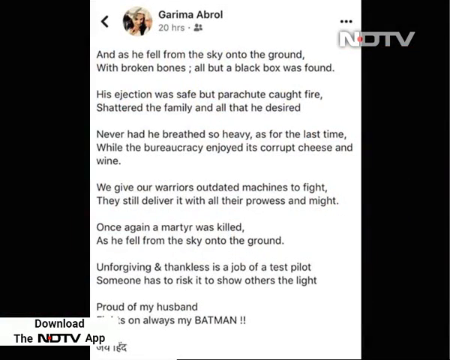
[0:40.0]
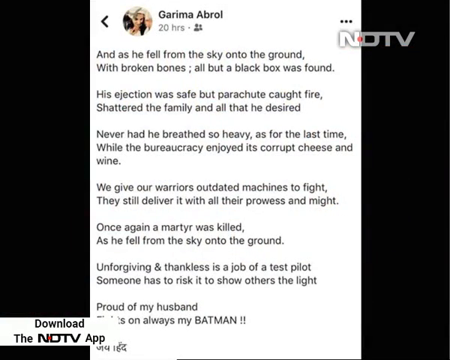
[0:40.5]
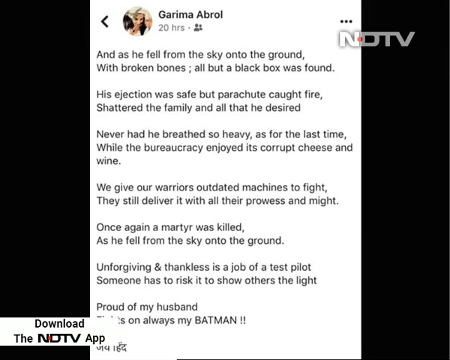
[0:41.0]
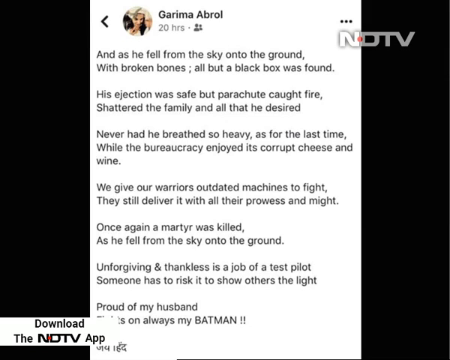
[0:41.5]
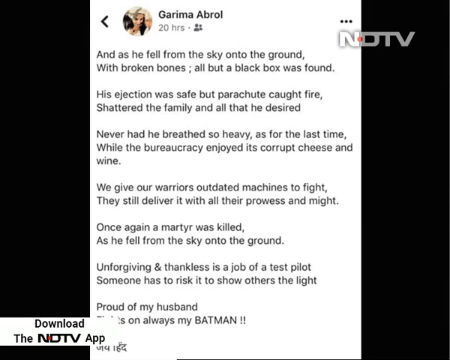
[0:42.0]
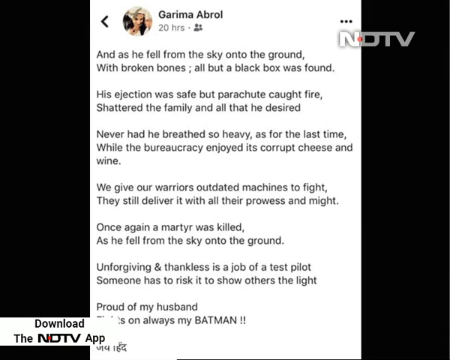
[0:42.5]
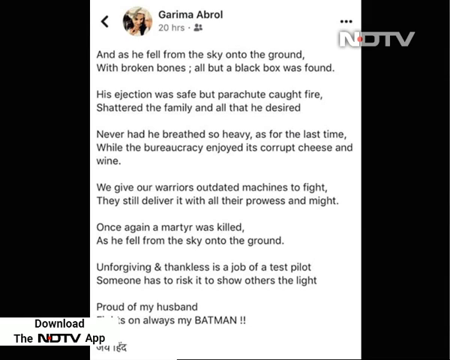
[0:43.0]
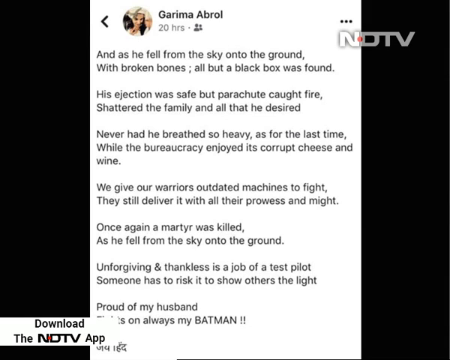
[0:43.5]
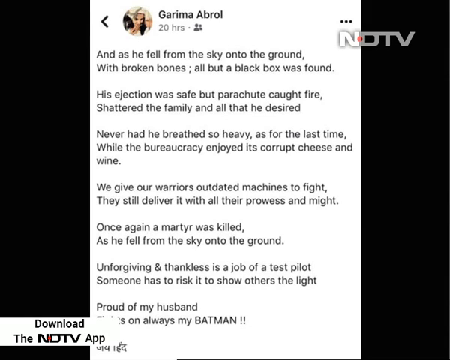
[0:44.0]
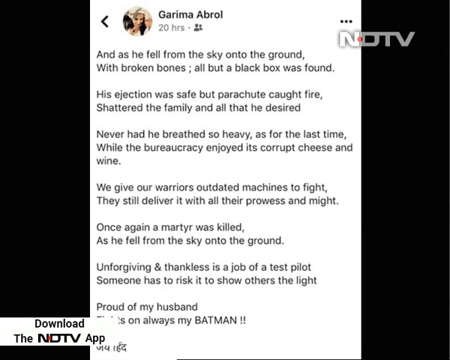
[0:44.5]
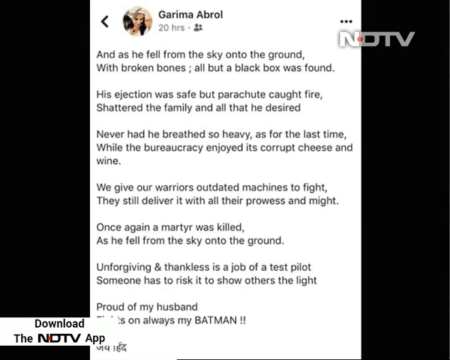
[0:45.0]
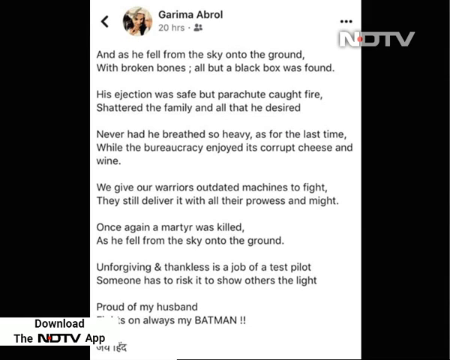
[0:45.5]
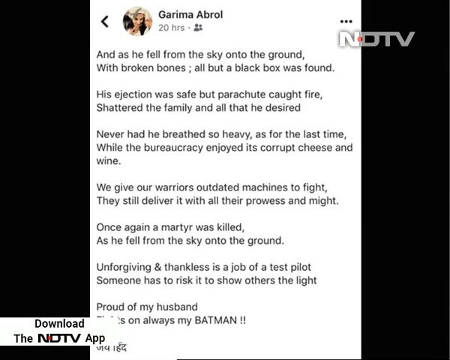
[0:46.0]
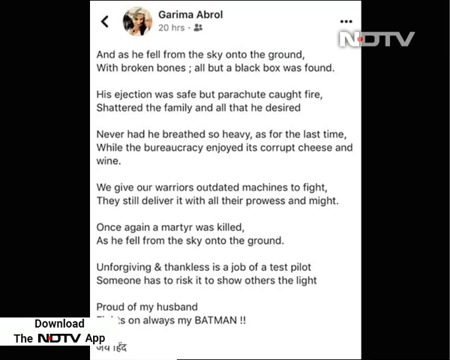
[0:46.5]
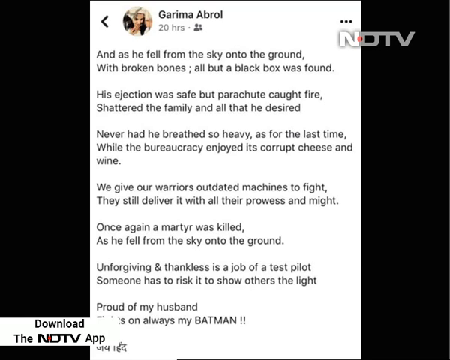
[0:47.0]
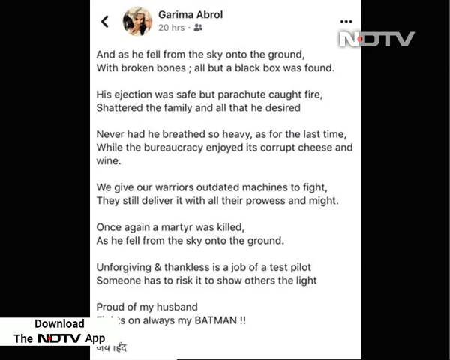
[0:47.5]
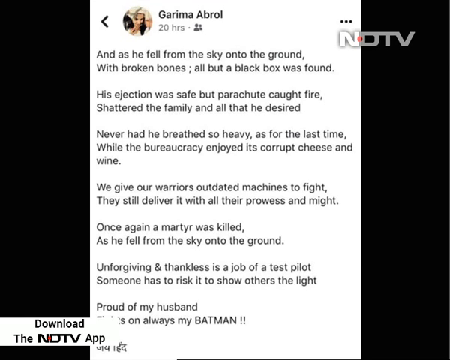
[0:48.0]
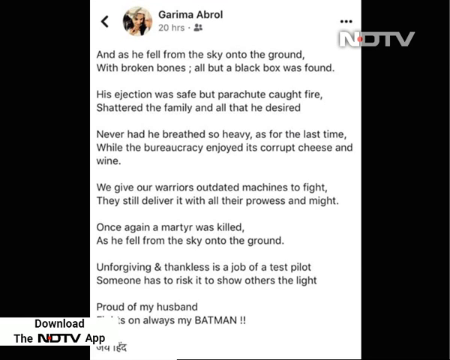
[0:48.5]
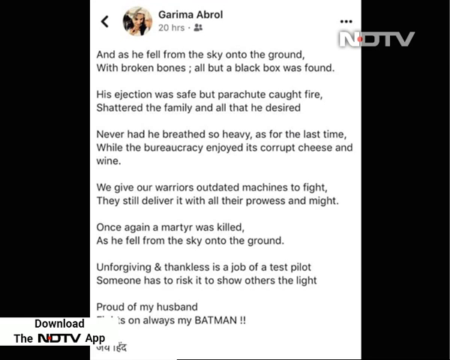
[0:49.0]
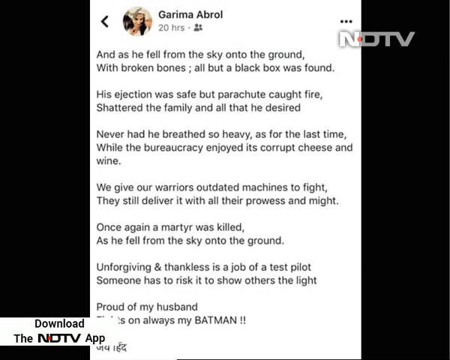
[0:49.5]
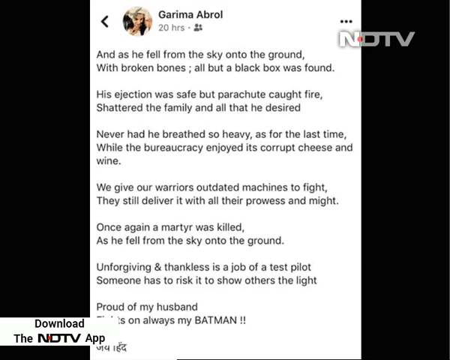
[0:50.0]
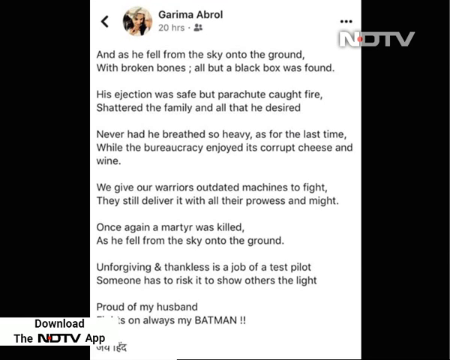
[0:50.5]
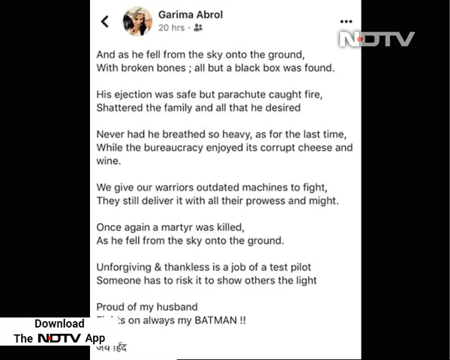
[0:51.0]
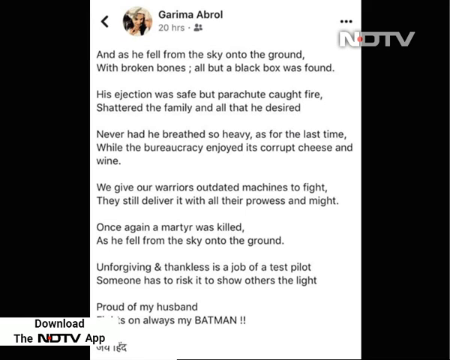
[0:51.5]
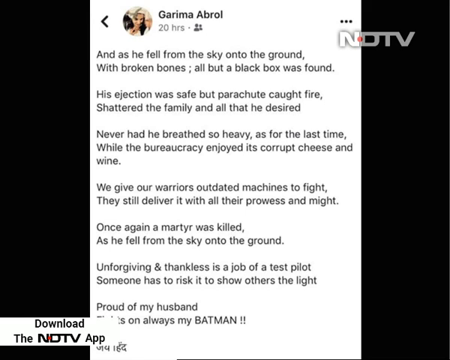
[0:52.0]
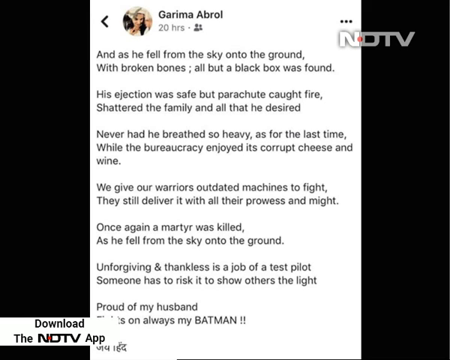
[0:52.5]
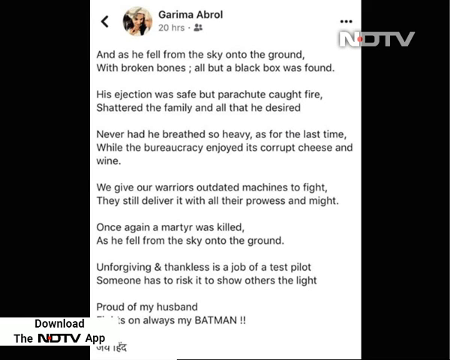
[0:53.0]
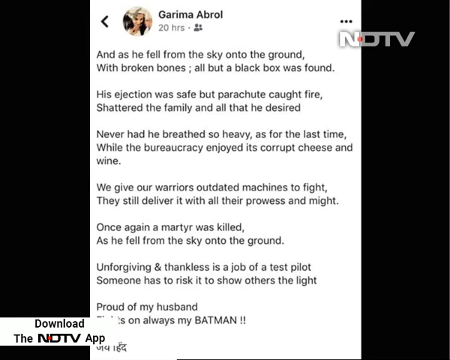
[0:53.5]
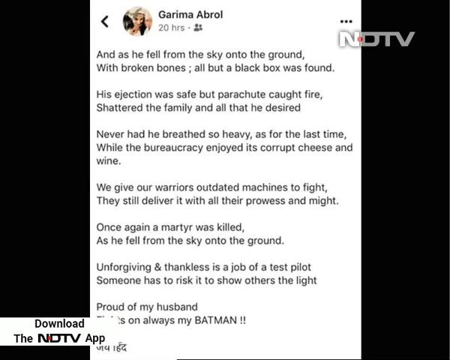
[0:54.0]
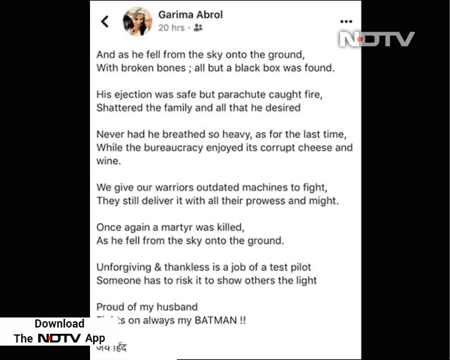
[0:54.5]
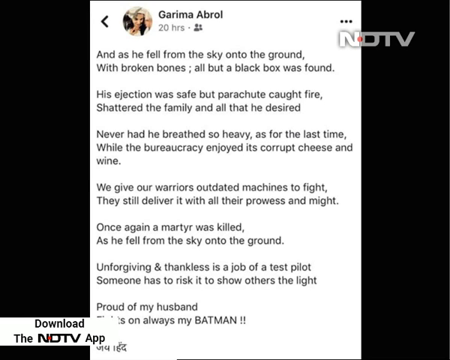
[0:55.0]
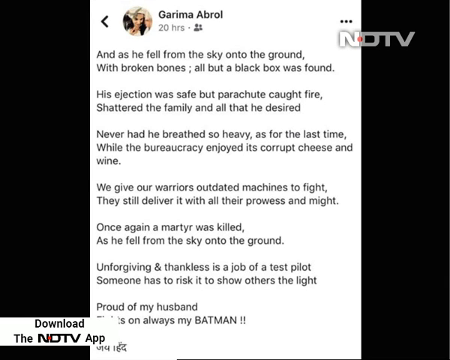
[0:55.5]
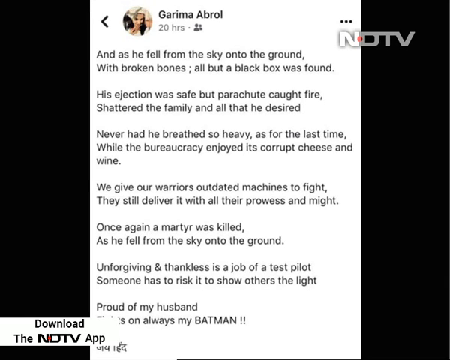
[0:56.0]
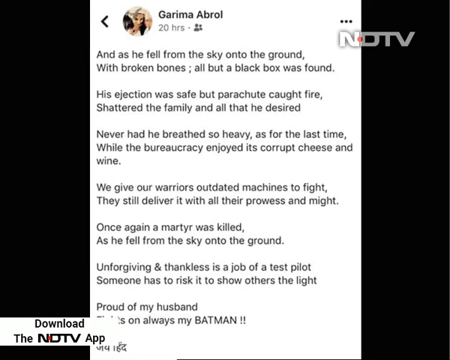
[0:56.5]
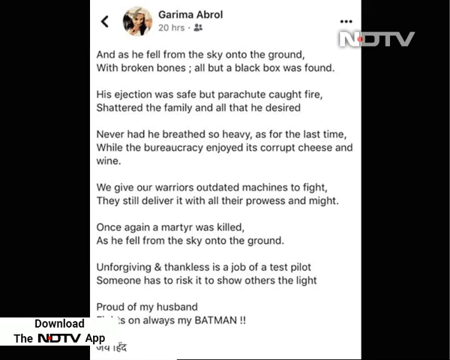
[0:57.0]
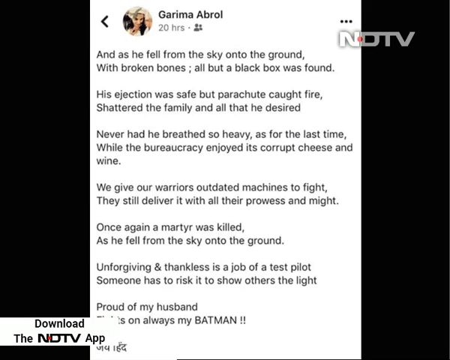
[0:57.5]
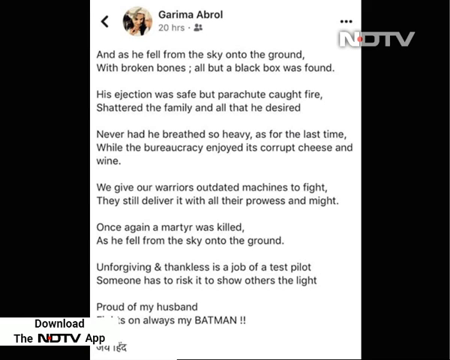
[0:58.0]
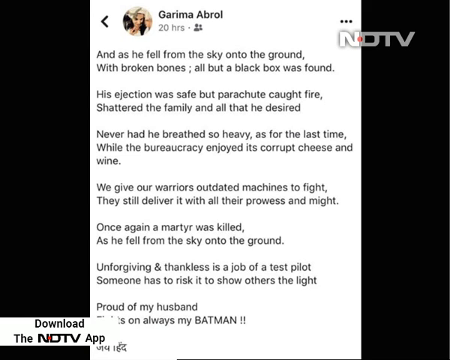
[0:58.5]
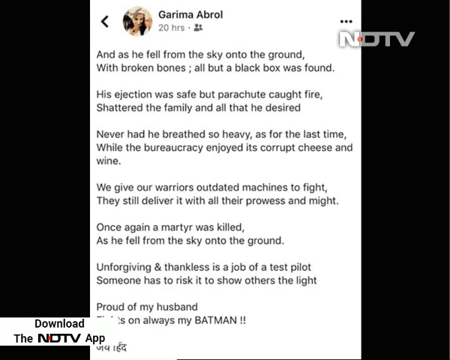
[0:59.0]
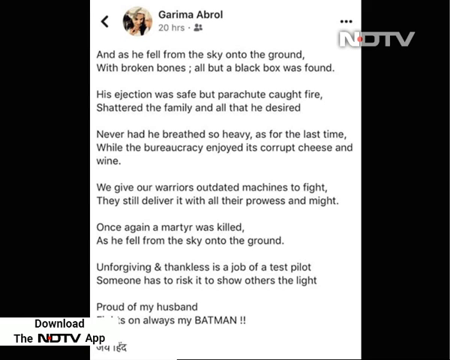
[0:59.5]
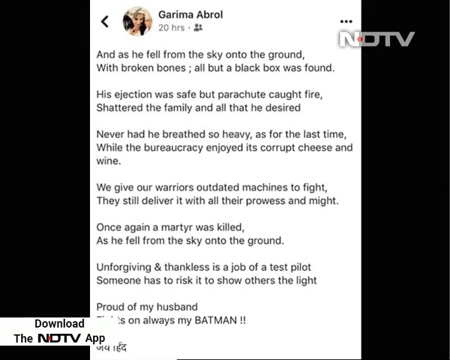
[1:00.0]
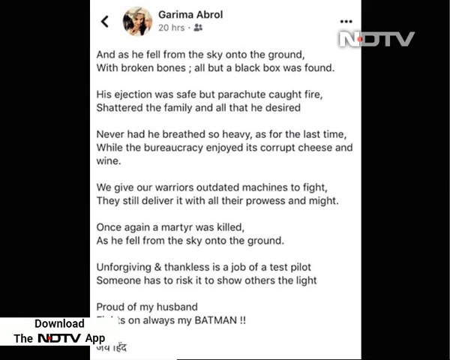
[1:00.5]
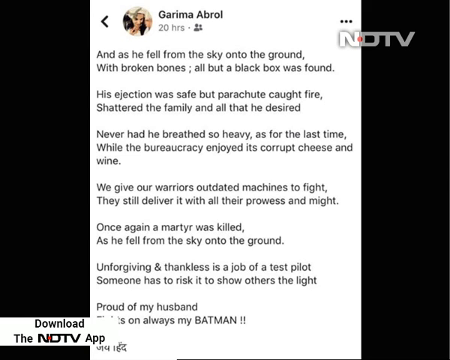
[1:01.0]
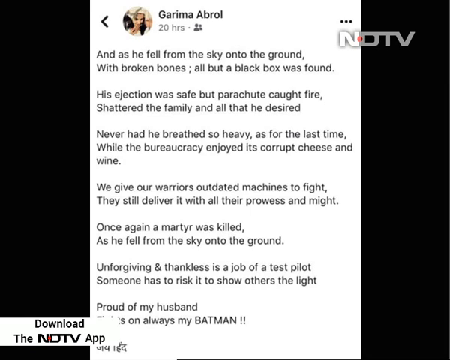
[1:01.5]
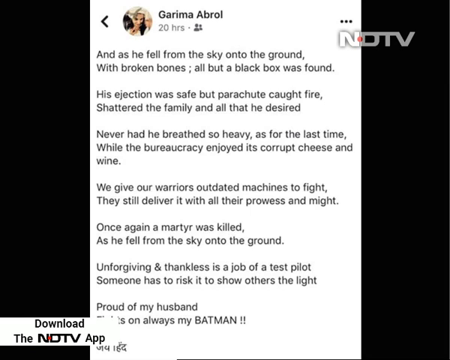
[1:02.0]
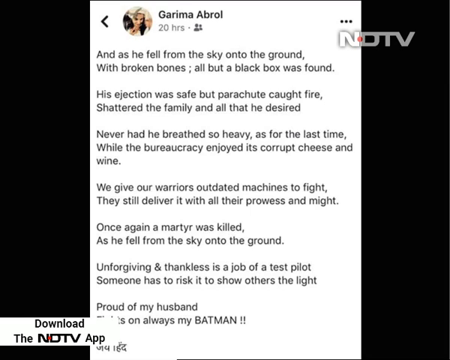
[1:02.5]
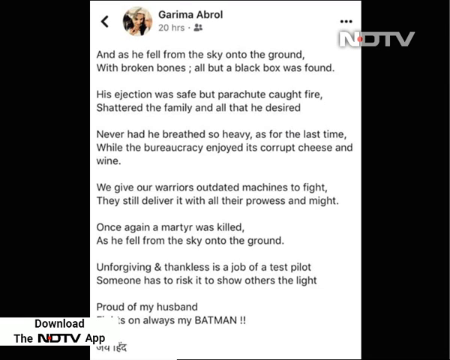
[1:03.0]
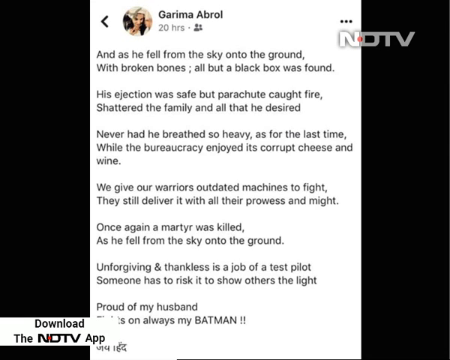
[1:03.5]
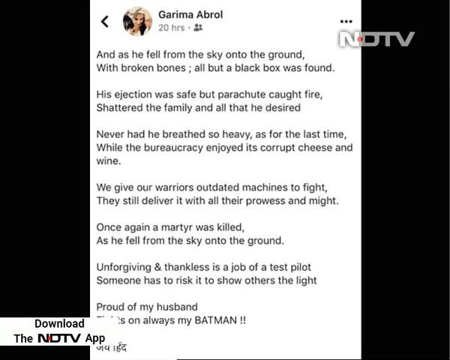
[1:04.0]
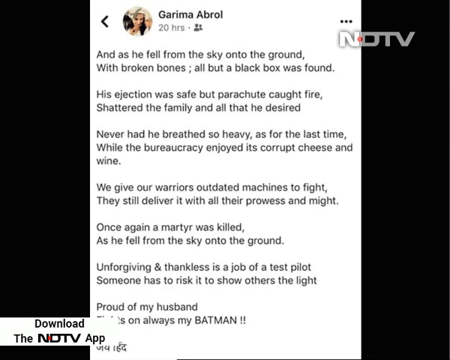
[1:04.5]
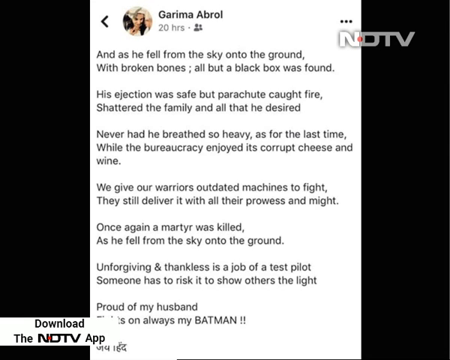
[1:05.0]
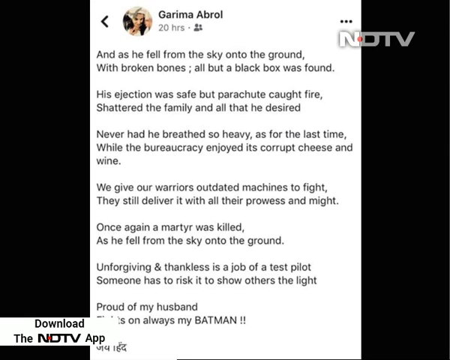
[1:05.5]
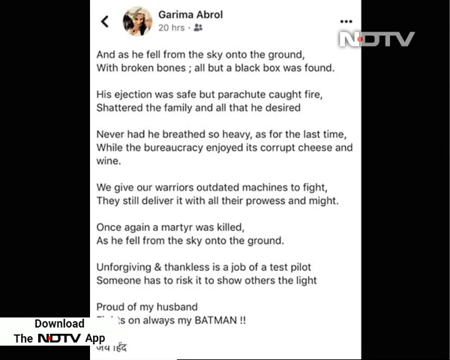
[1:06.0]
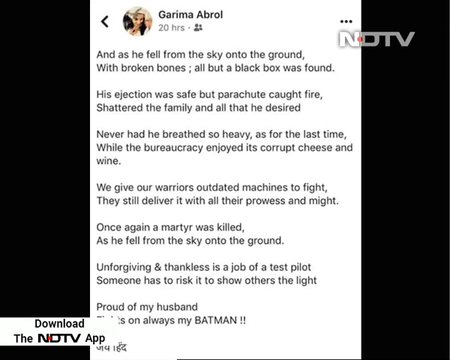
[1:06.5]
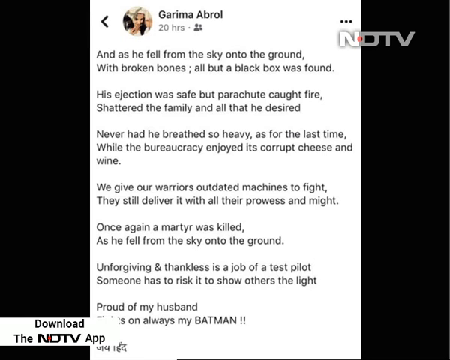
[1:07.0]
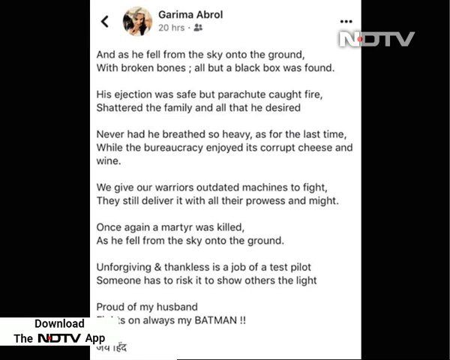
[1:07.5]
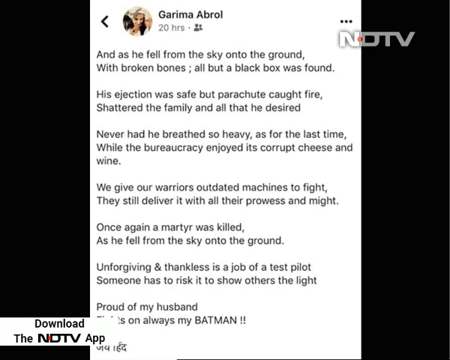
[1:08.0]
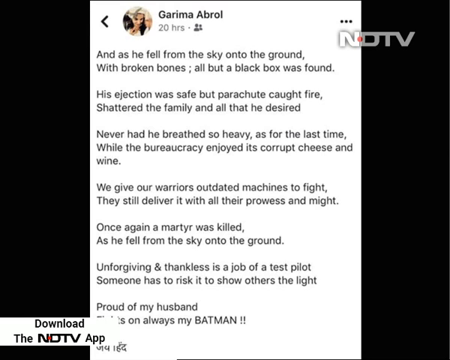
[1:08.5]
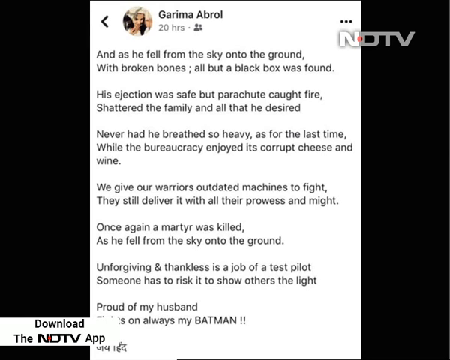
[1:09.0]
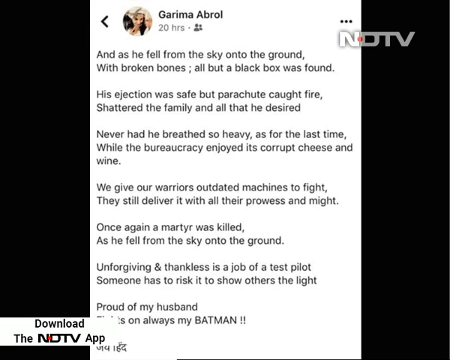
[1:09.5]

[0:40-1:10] An Indian news reporter sits against a grey background, with the word "NDTV" at the top right. He wears a white waistcoat with a blue striped shirt and sits in front of a laptop. The story seems to be about a plane crash, and the victims' families are shown sitting in sorrow. An Instagram post from Karima then appears, about a family member who was apparently her husband. While the post is shown, the bottom left corner offers the option to download the NDTV app.